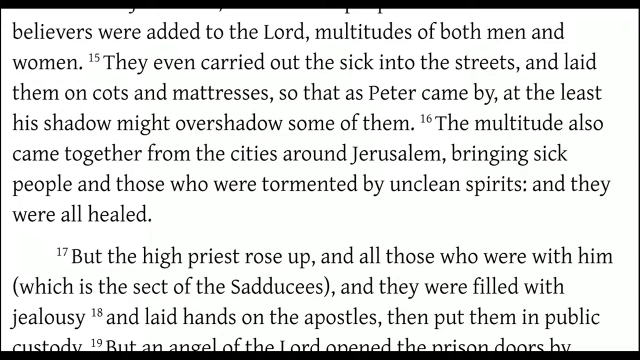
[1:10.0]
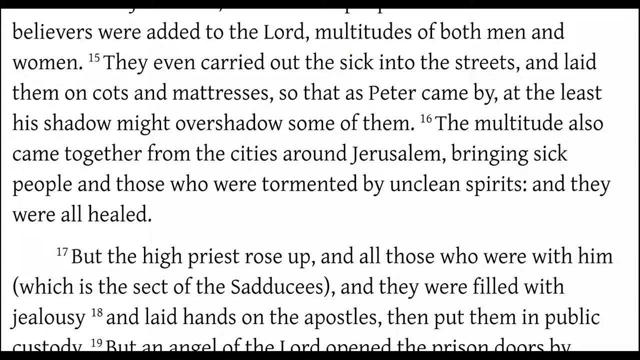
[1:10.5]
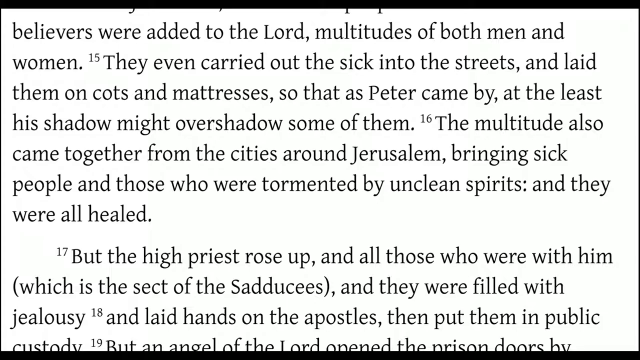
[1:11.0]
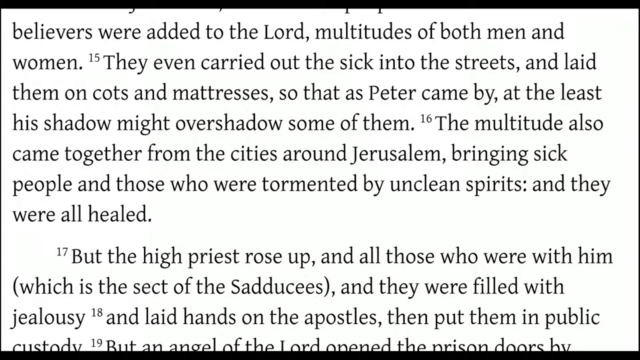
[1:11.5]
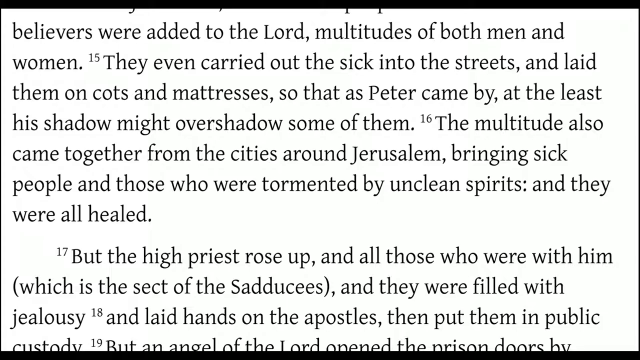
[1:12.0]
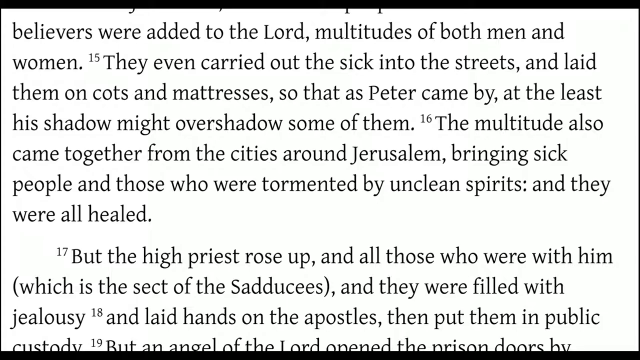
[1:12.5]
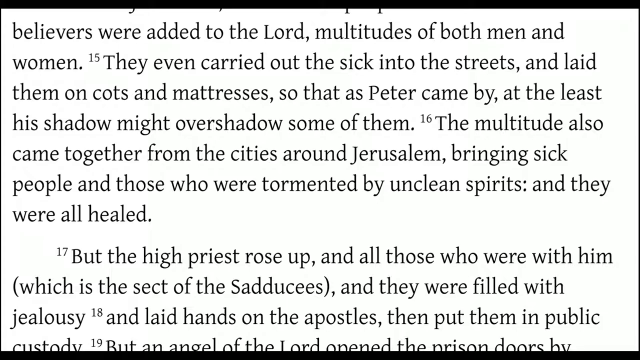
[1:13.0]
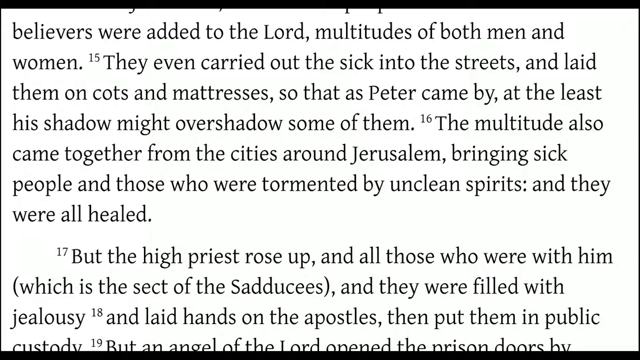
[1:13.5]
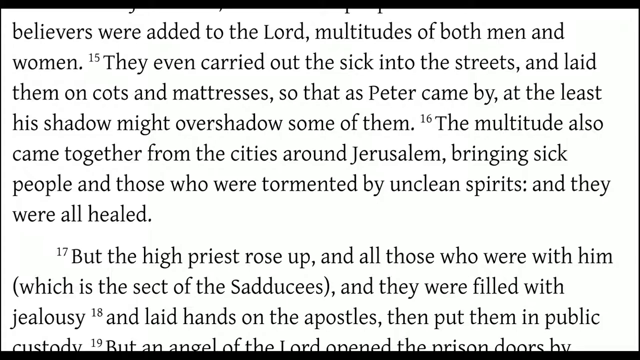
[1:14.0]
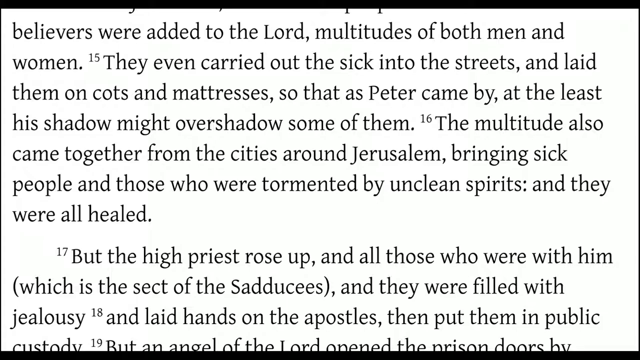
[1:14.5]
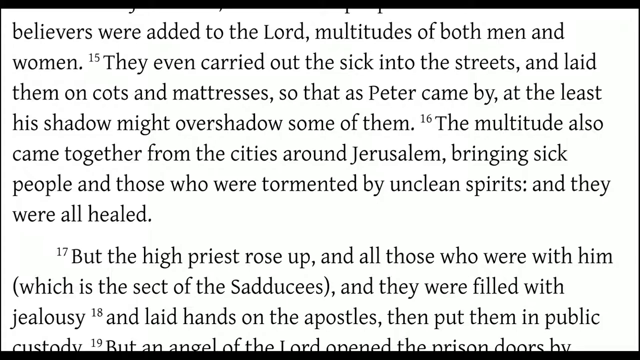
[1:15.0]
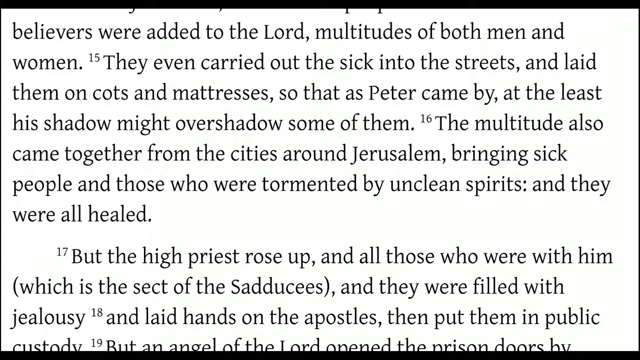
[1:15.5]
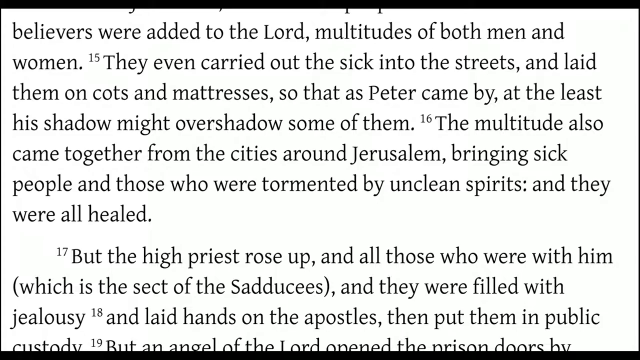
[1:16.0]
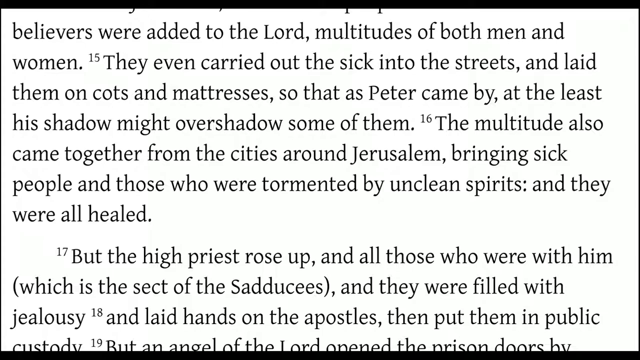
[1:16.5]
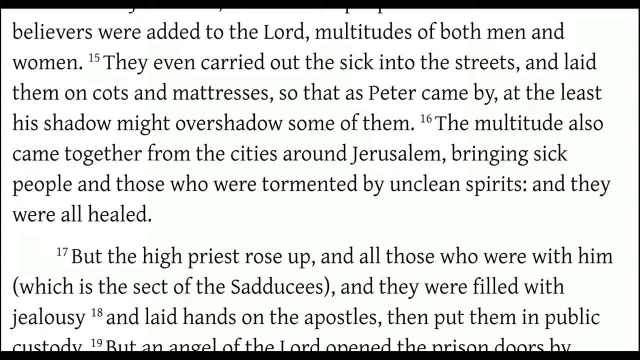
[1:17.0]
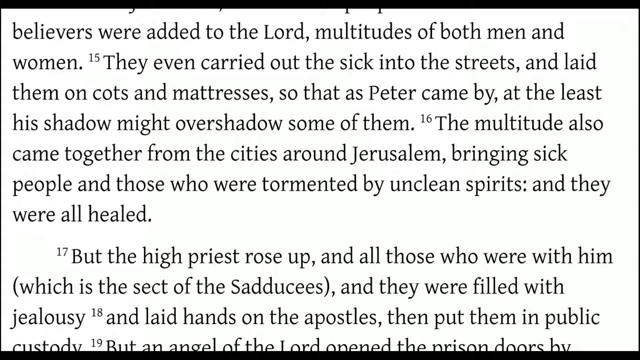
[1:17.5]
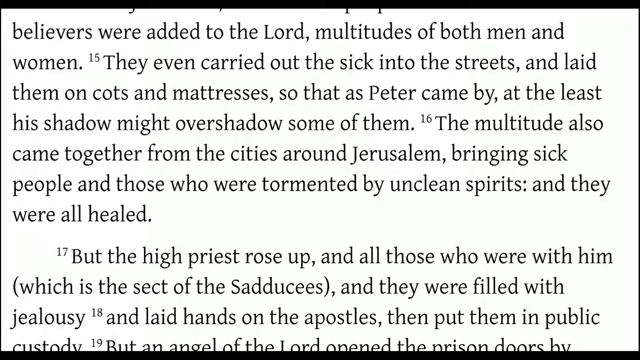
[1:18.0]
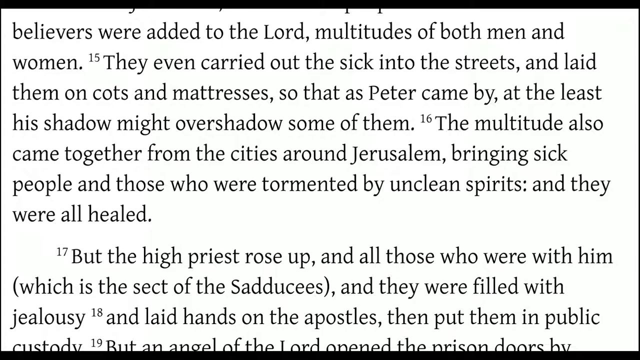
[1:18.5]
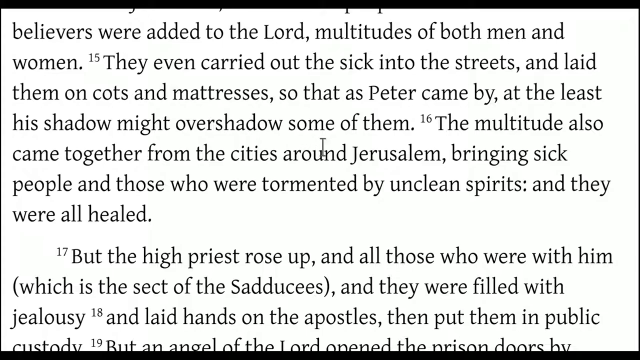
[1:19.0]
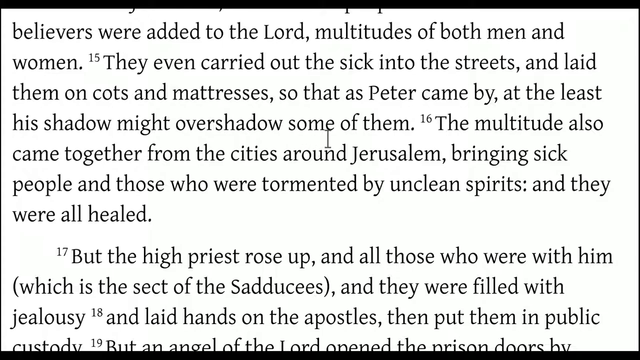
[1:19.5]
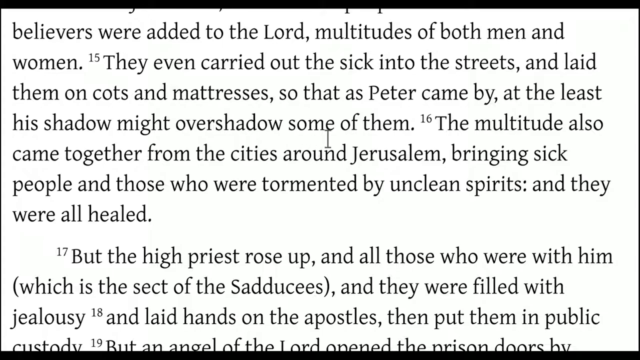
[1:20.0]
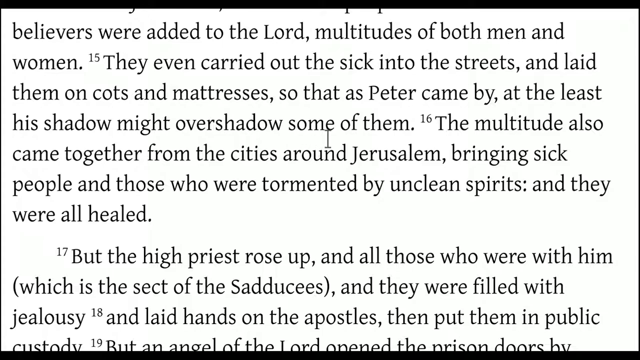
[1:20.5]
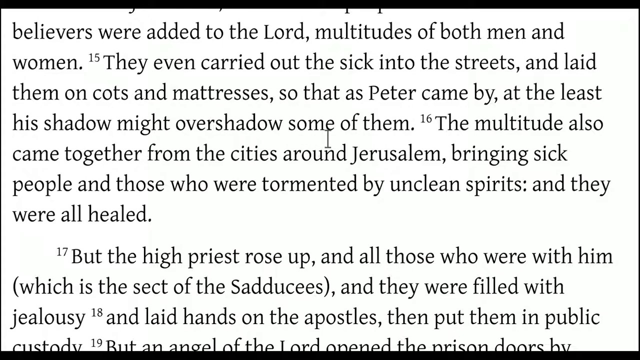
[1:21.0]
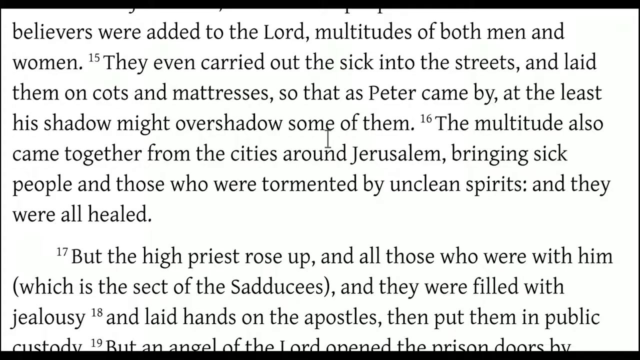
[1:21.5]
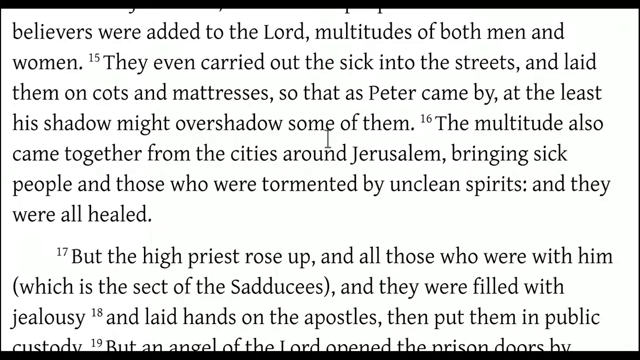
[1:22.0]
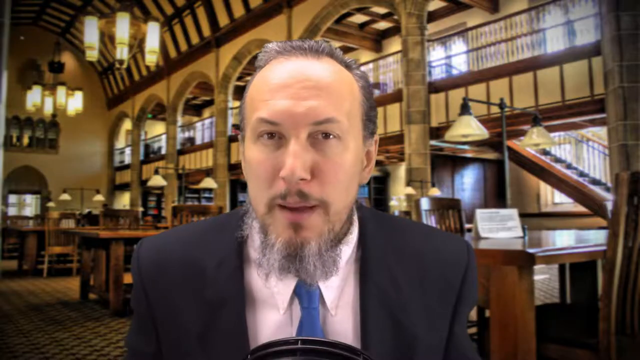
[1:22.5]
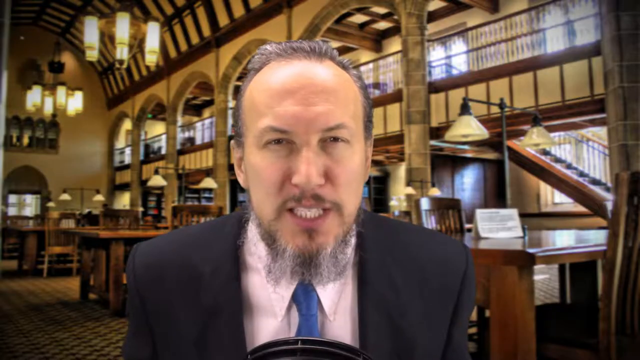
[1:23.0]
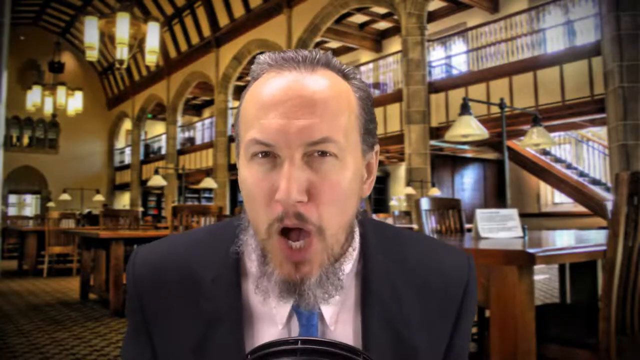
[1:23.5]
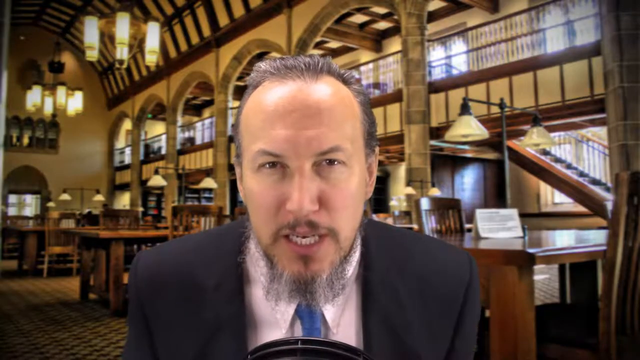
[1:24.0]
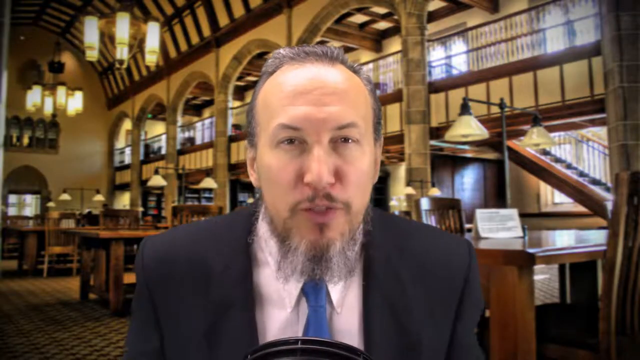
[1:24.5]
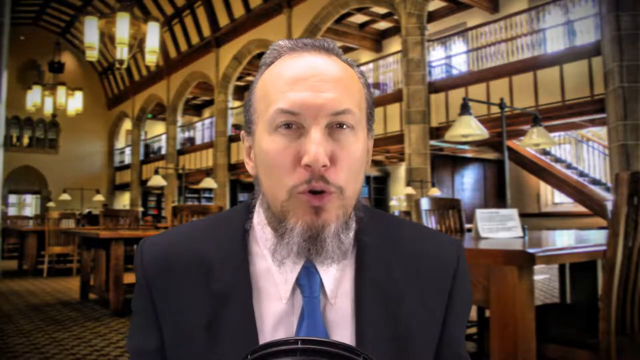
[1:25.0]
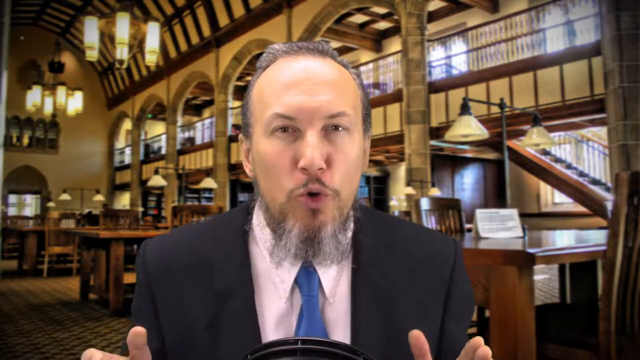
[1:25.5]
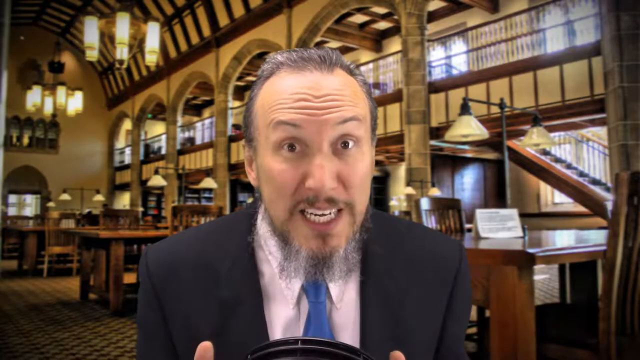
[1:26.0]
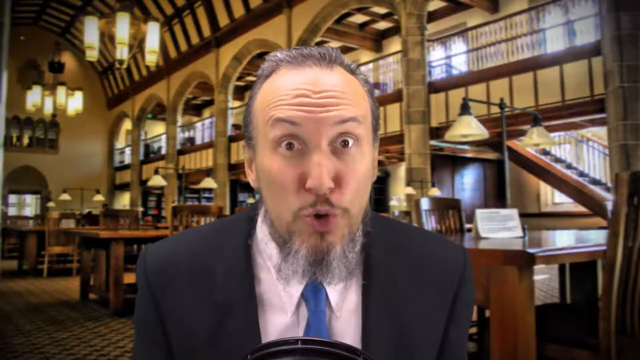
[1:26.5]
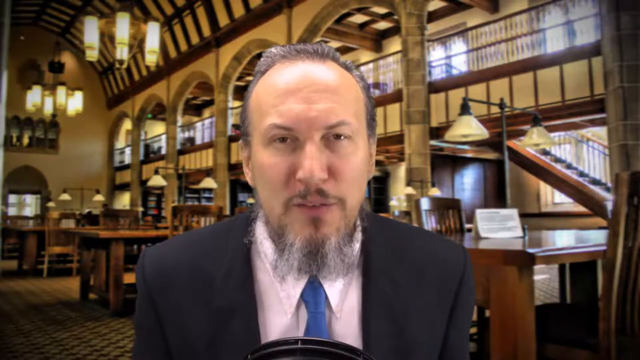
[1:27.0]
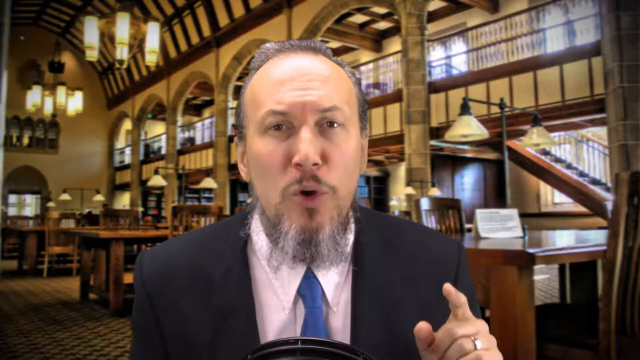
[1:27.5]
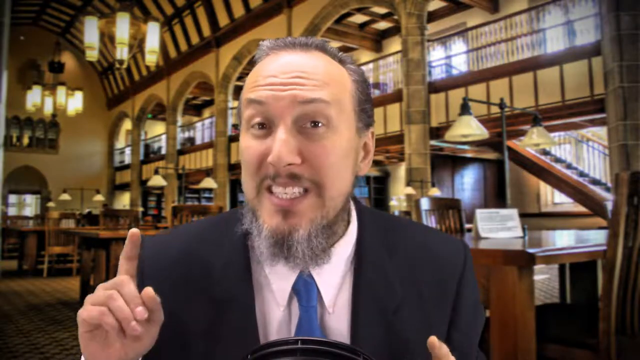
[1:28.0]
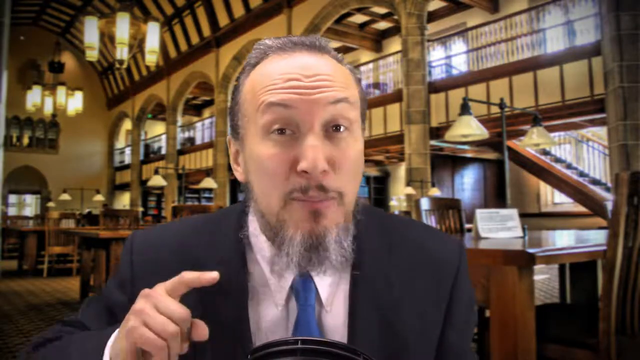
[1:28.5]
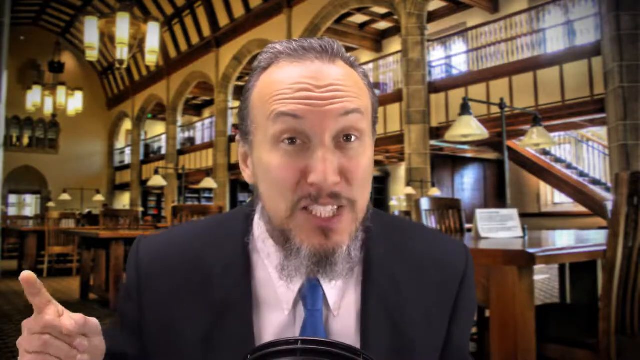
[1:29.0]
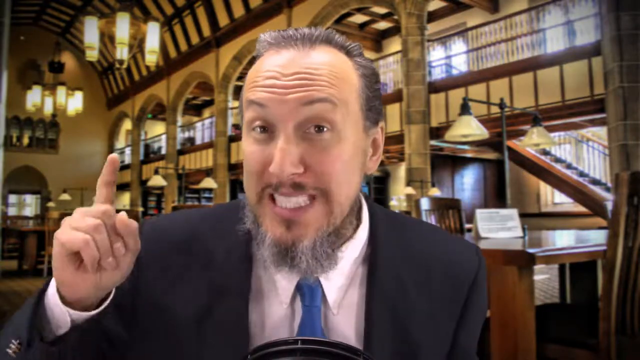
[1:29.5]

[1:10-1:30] A page of text from a book is shown, black text on a white background: "Believers were added to the Lord, multitudes of both men and women. They even carried out the sick into the streets and laid them on cots and mattresses so that as Peter came by, at least his shadow might overshadow some of them." A footnote of 16 follows with "The multitude also came together from the cities around Jerusalem, bringing sick people and those who were tormented by unclean spirits, and they were all healed." The page scrolls a bit, and then the video cuts back to the man facing the camera in the library setting. He speaks very passionately, both hands coming up and moving rather quickly, going back down, and coming back in front of the camera with both index fingers pointing upward. Then he sort of does a snapback with the index finger of his right hand, stressing his point.